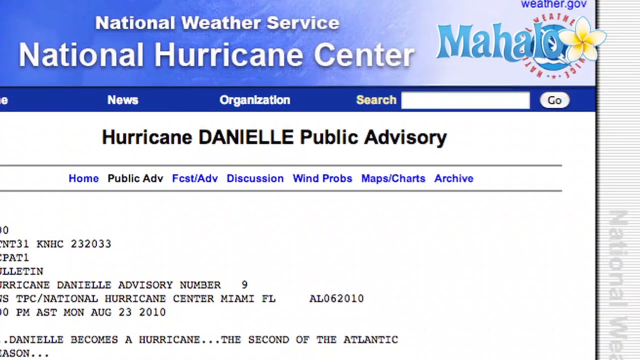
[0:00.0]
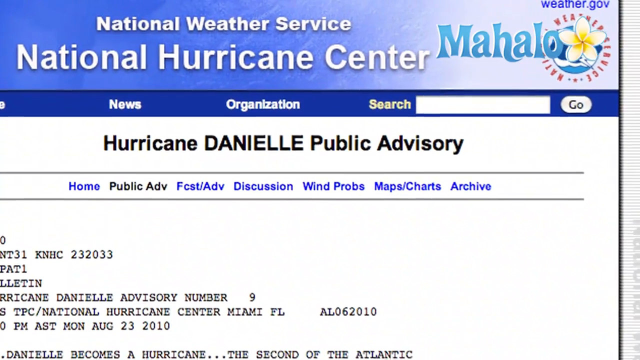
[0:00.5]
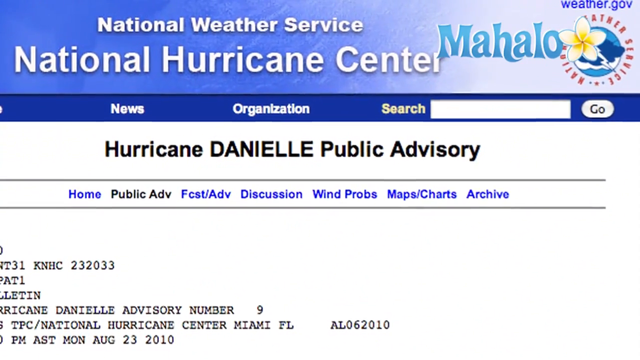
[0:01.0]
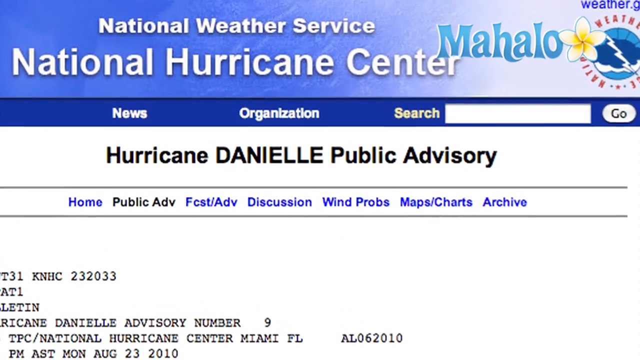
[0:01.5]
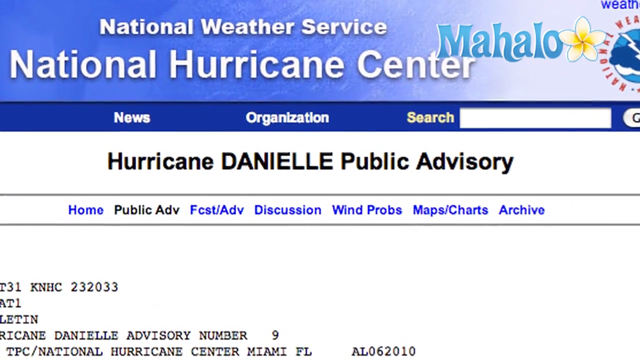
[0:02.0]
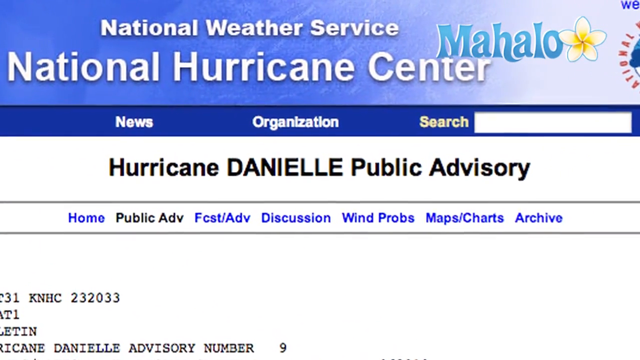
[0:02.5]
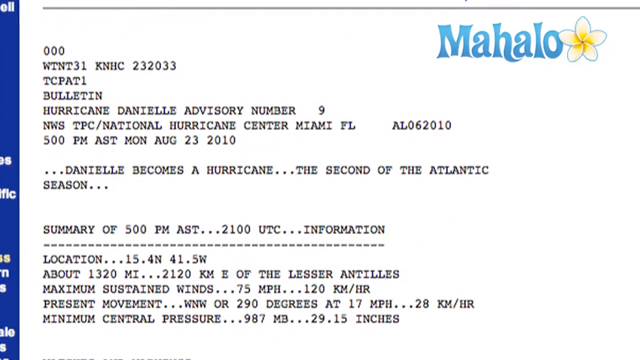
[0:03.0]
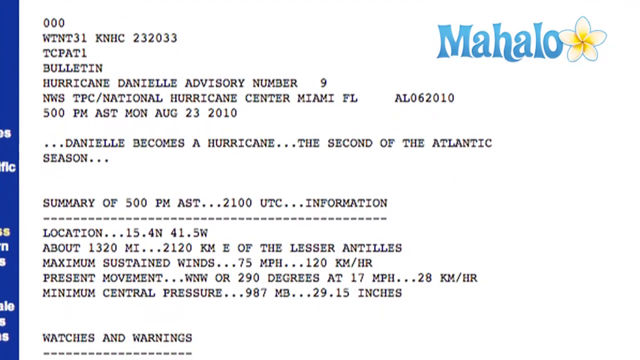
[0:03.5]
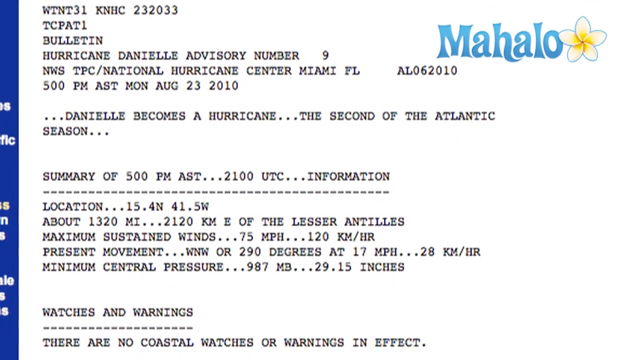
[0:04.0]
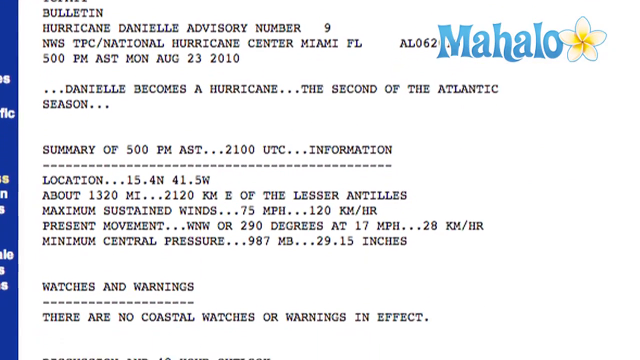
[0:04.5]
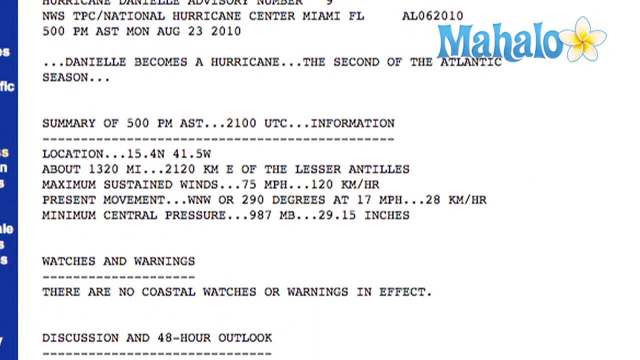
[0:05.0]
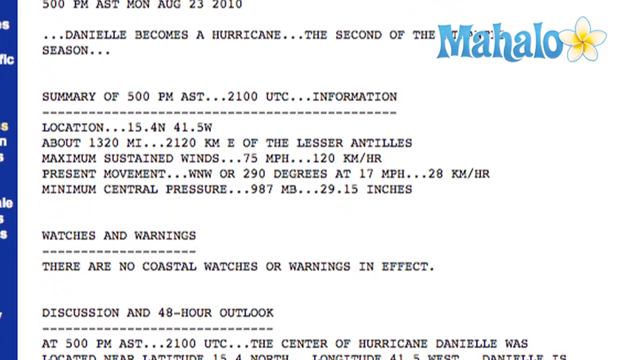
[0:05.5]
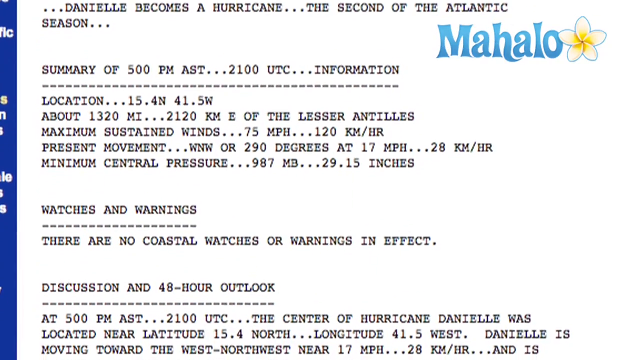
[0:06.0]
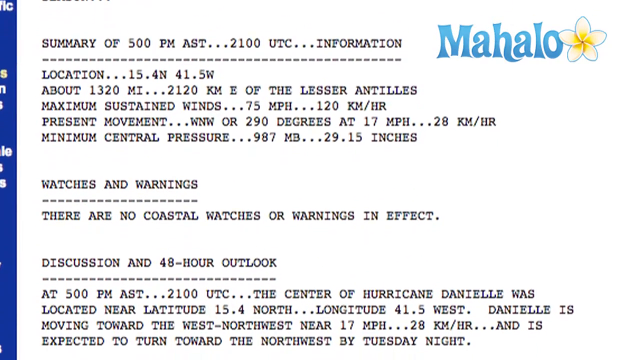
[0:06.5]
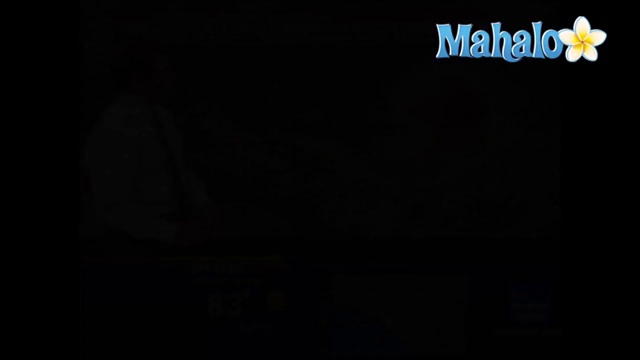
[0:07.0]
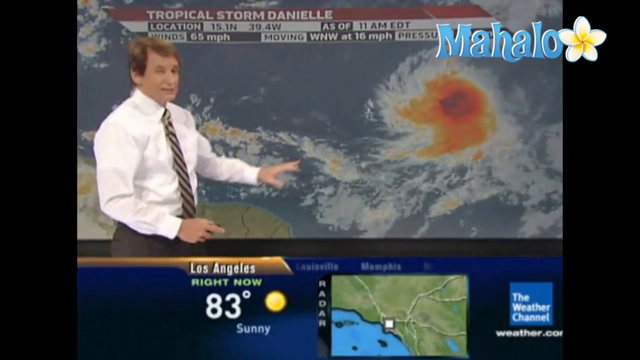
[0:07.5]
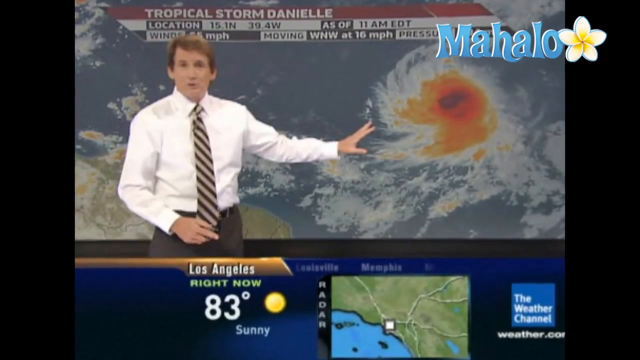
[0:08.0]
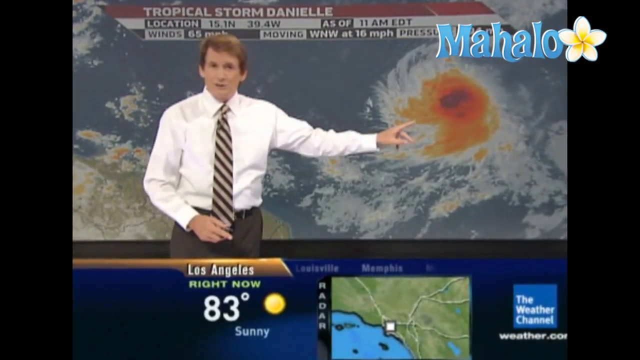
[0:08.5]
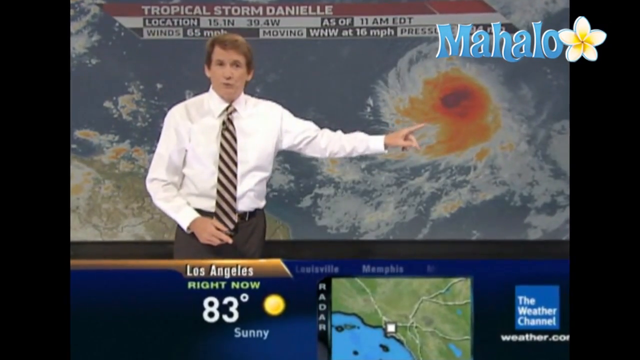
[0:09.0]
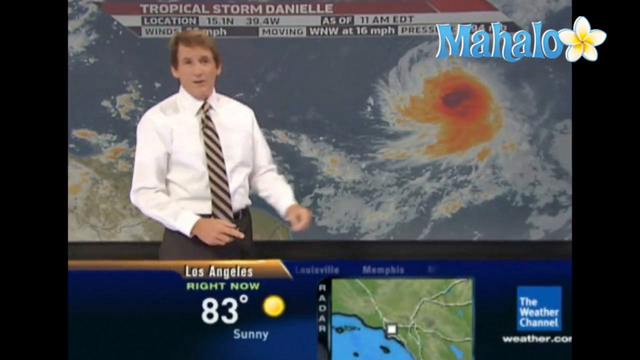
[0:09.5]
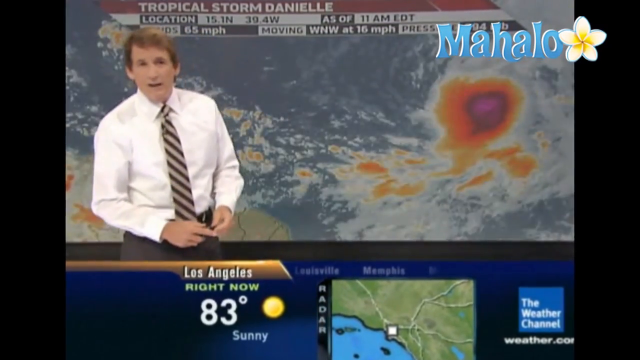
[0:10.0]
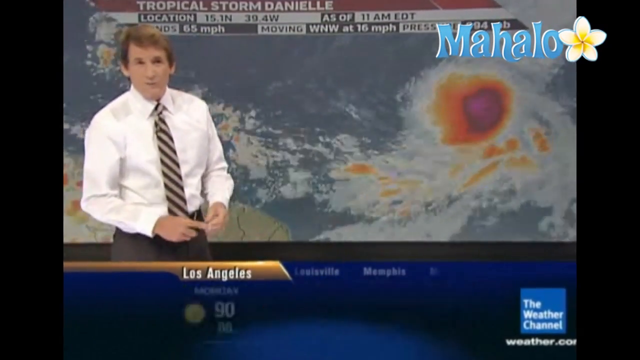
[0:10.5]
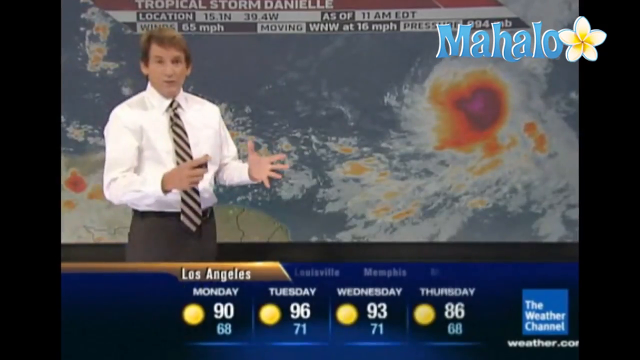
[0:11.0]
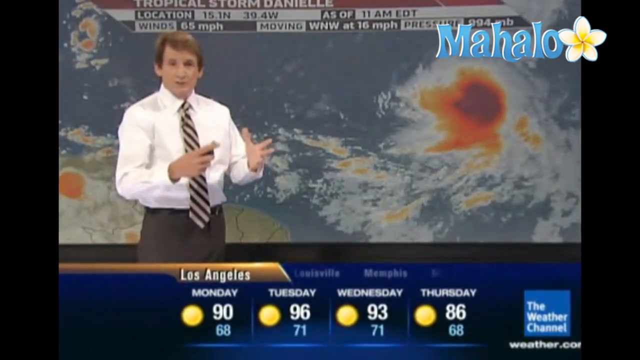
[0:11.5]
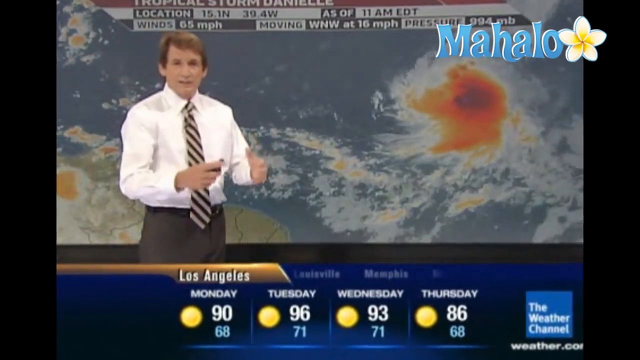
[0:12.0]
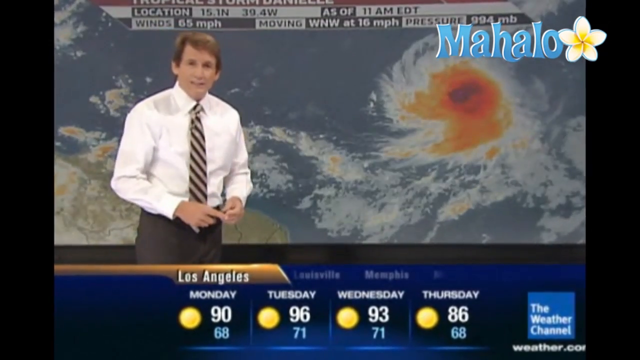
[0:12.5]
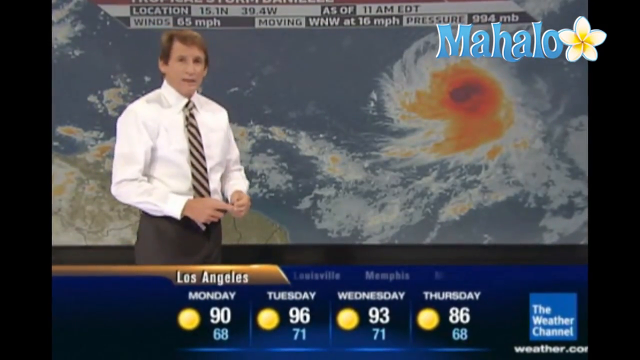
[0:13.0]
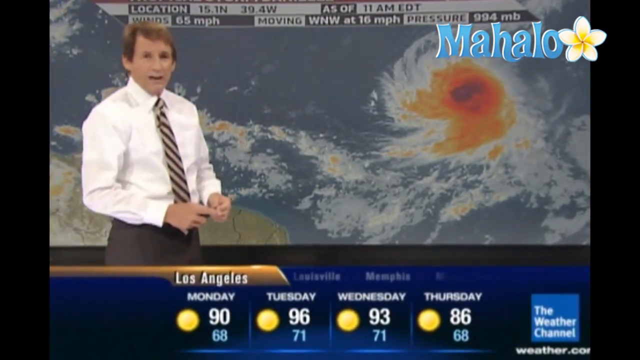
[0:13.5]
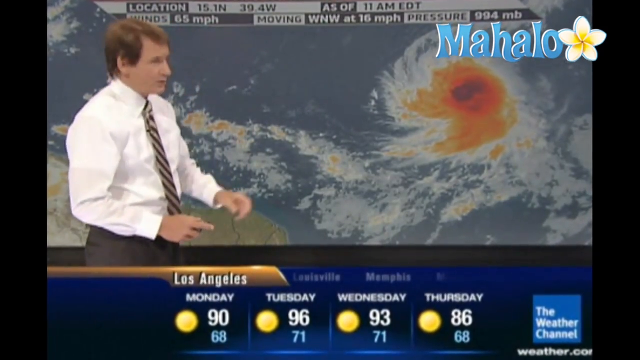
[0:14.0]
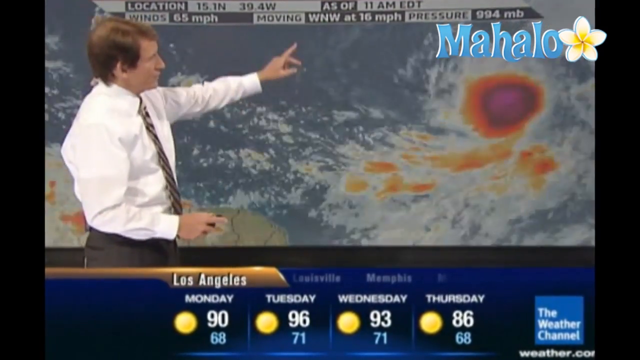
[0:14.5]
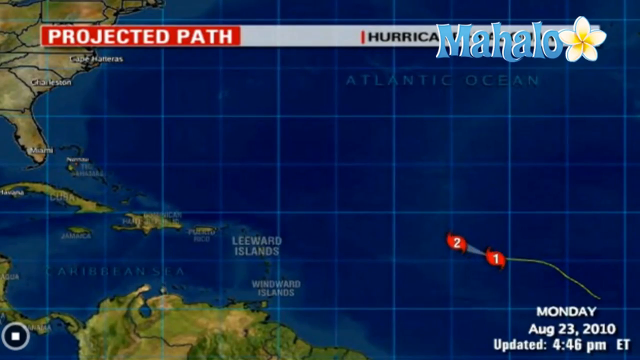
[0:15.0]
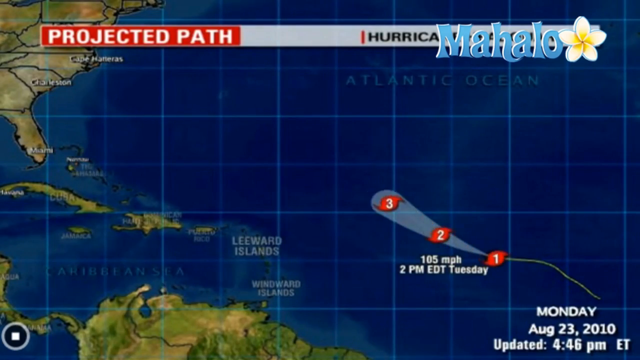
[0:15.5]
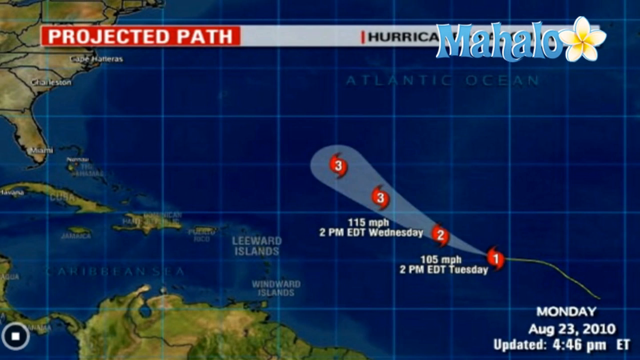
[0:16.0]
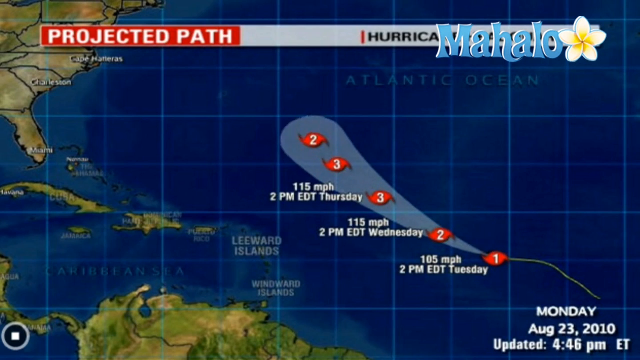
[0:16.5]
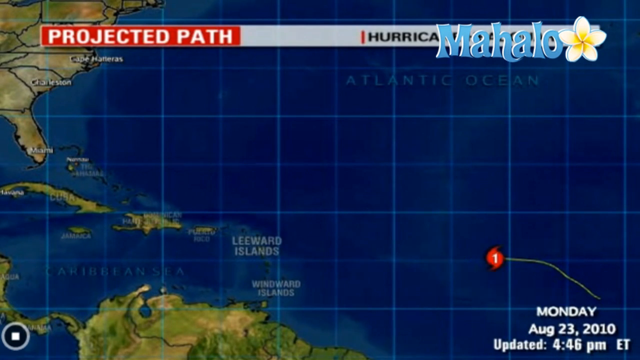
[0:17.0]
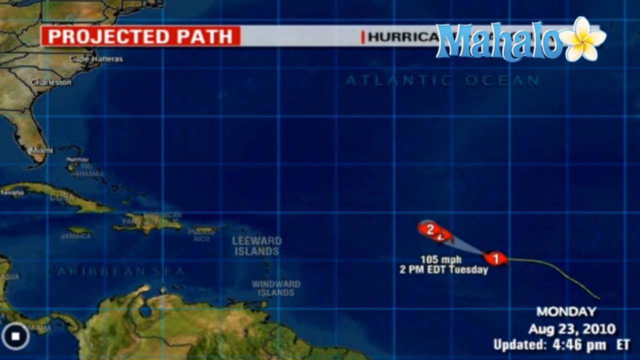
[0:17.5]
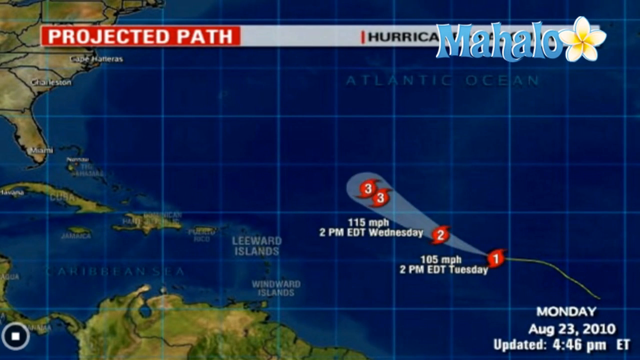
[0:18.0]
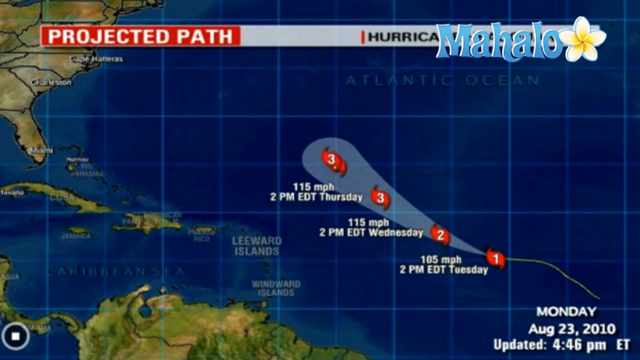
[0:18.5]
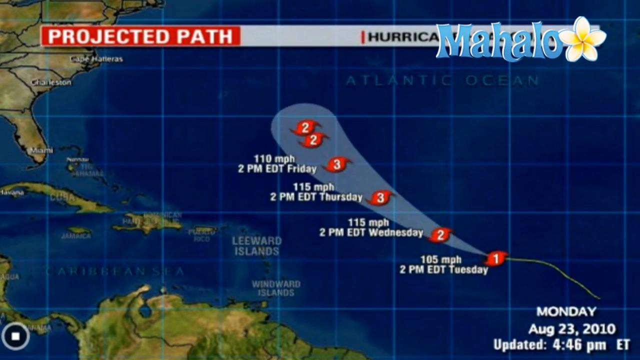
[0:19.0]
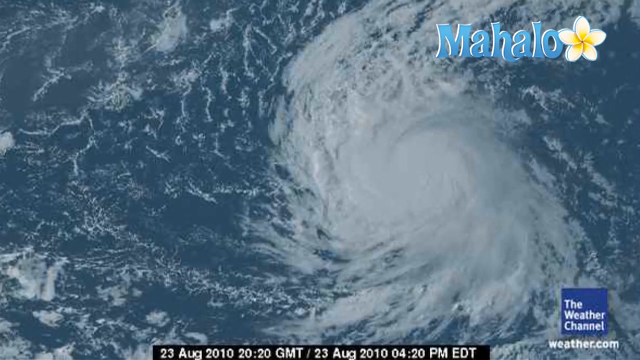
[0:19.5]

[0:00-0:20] A Mahalo website shows "National Hurricane Center", "National Weather Service", "Hurricane Daniel" and the public advisory. The bulletin for Hurricane Daniel is number 9, listing the location, a maximum speed of 75 miles per hour, the minimum central pressure and other information about it. A presenter then shows the hurricane, which appears in red. Weather for other cities is also shown, such as Los Angeles: 90 Fahrenheit on Monday, 96 on Tuesday, 93 on Wednesday and 86 on Thursday. The projected path of the hurricane shows it going to the center of the Atlantic Ocean and then spreading upwards, with a maximum speed from 105 to 150 miles per hour, reaching halfway across the Atlantic Ocean from Thursday to Friday. This is on a Monday in 2019.